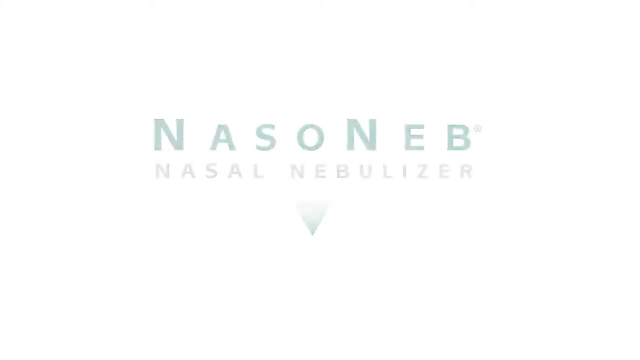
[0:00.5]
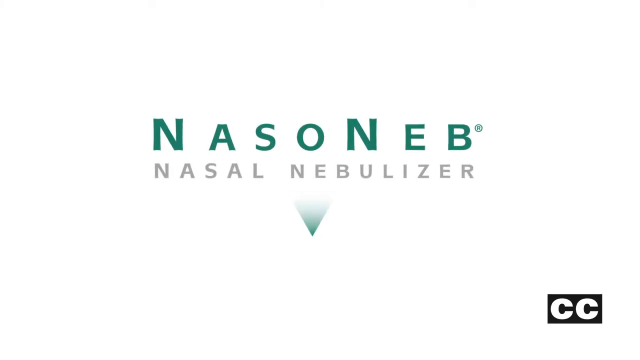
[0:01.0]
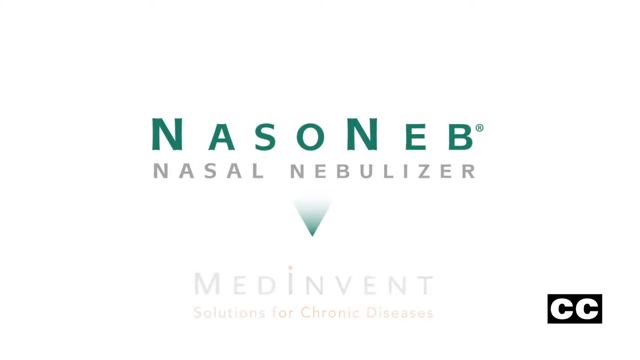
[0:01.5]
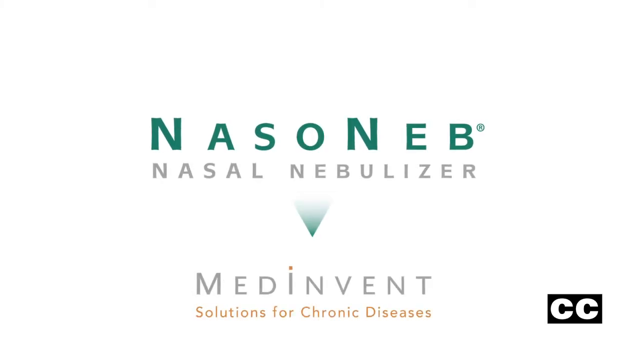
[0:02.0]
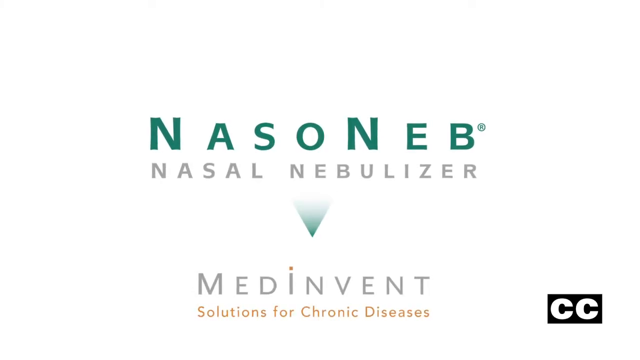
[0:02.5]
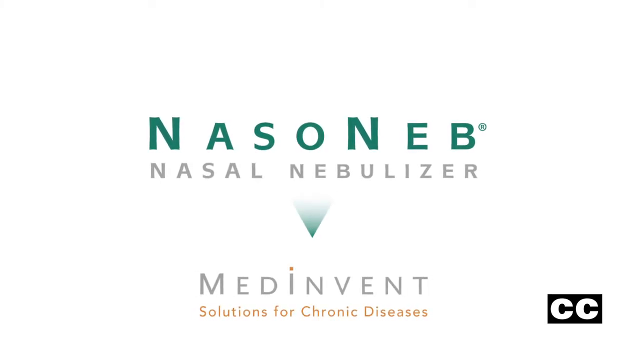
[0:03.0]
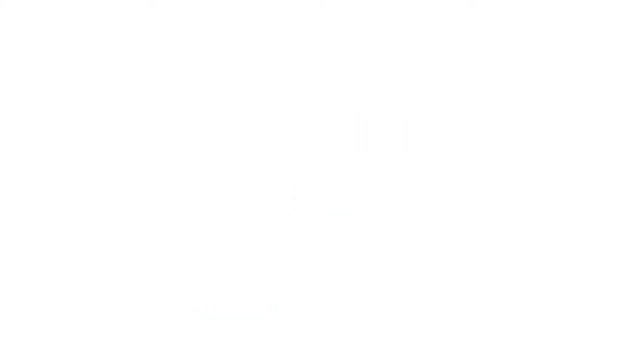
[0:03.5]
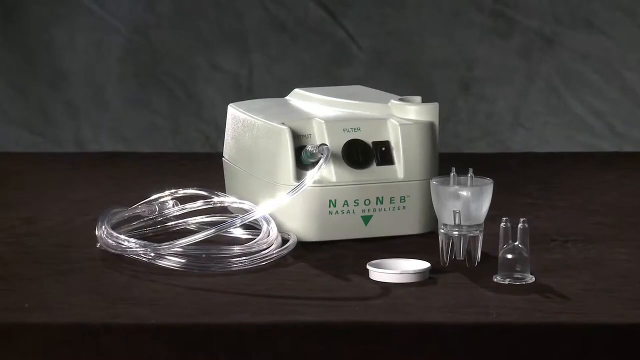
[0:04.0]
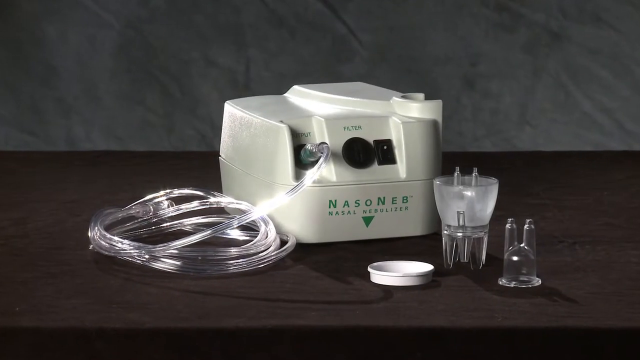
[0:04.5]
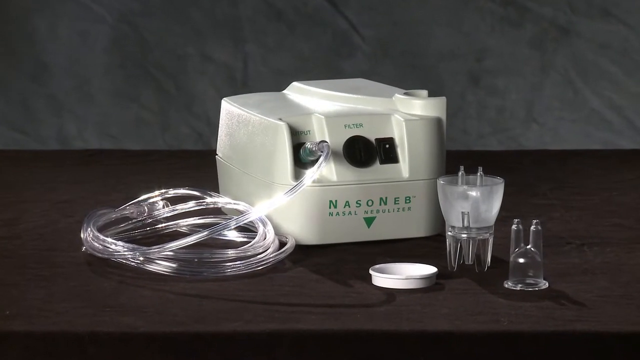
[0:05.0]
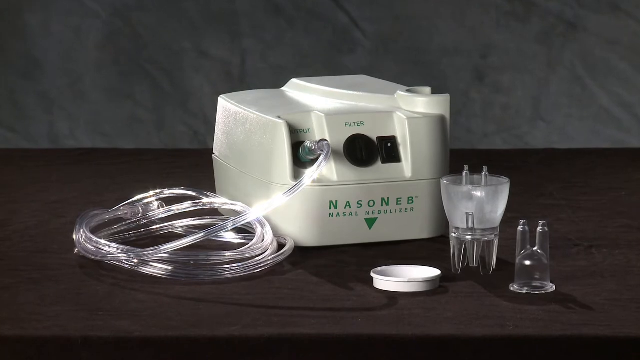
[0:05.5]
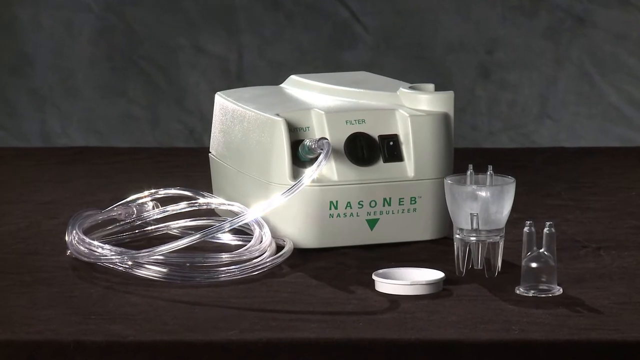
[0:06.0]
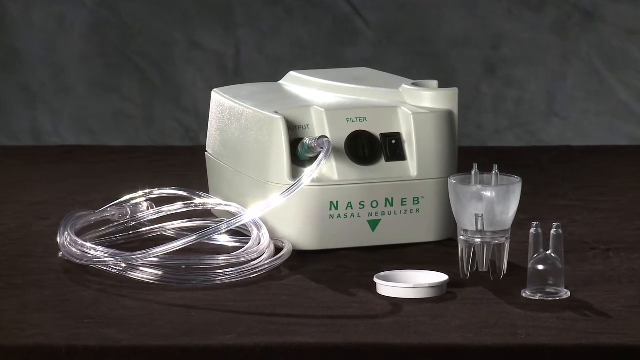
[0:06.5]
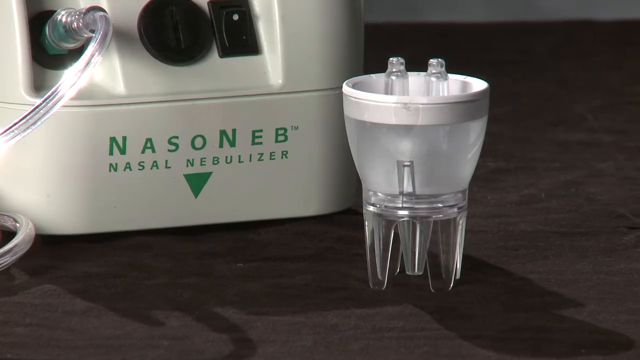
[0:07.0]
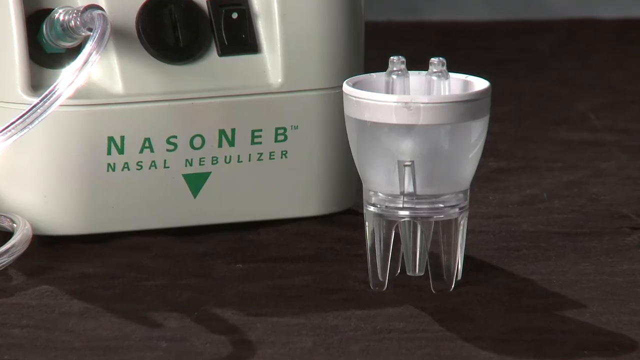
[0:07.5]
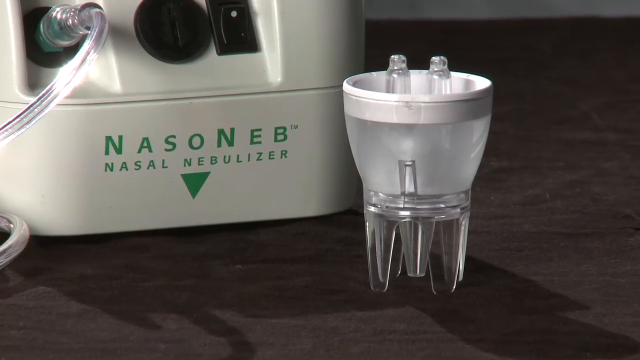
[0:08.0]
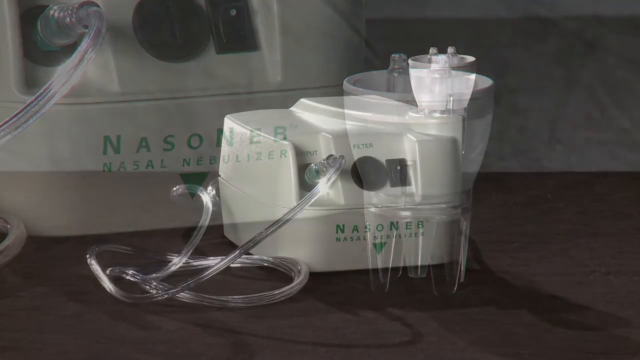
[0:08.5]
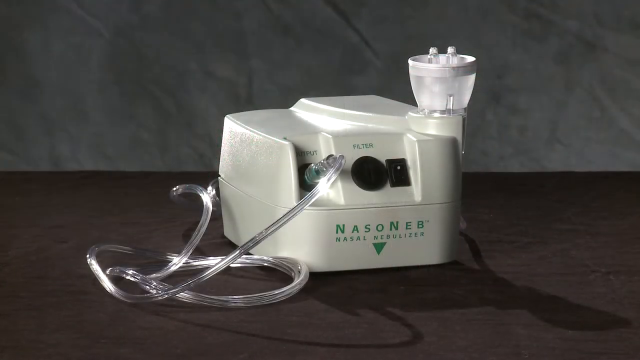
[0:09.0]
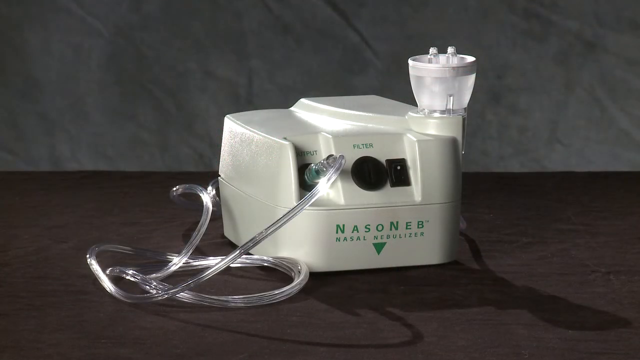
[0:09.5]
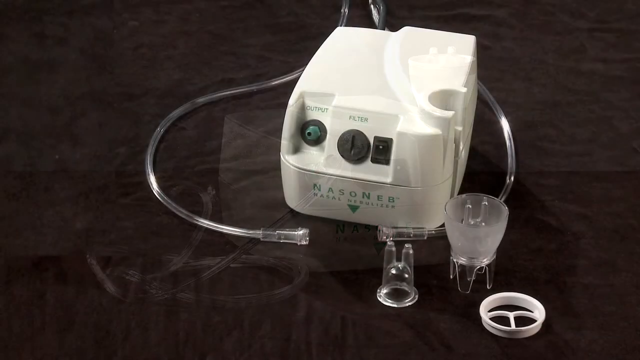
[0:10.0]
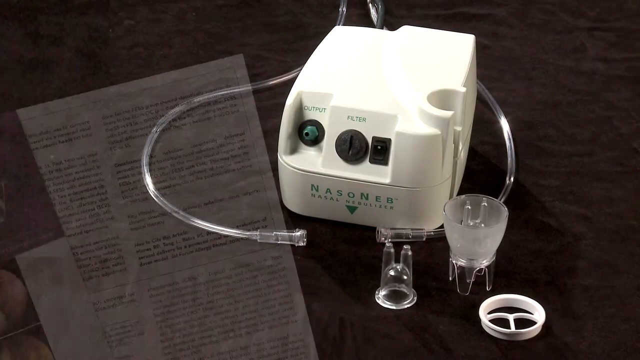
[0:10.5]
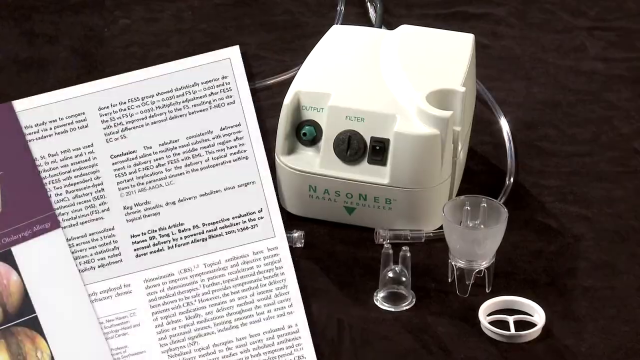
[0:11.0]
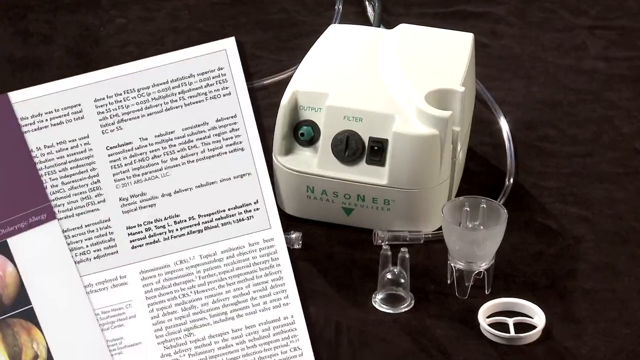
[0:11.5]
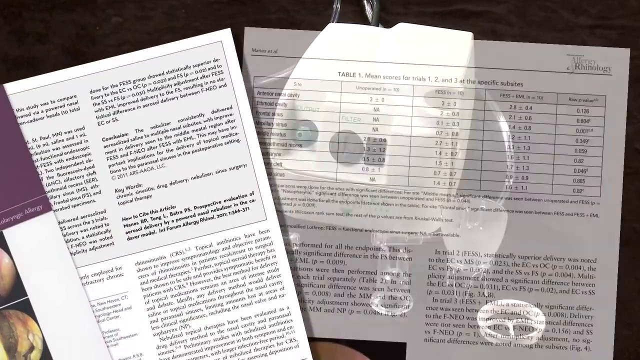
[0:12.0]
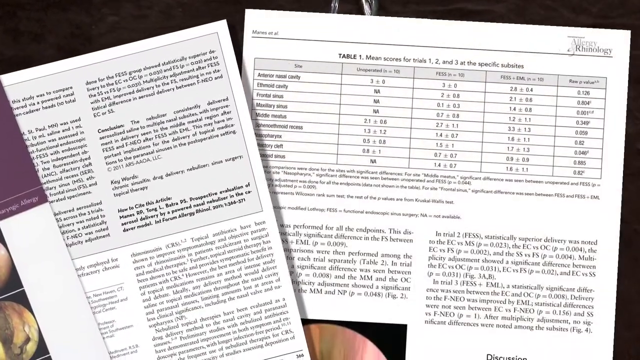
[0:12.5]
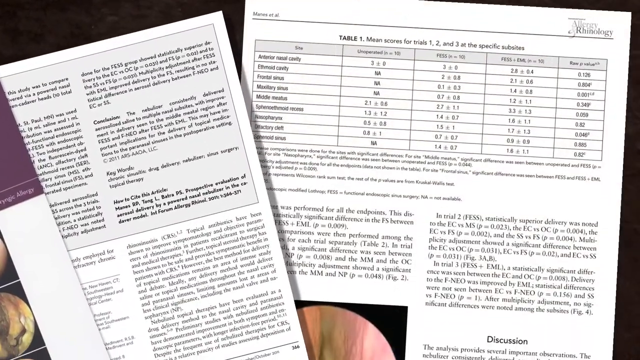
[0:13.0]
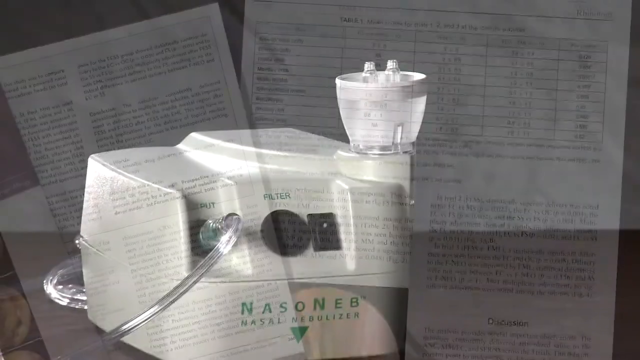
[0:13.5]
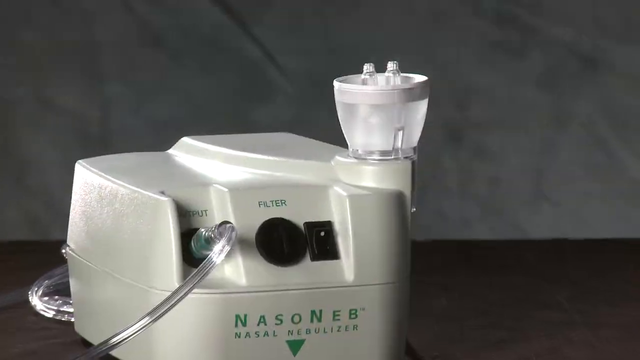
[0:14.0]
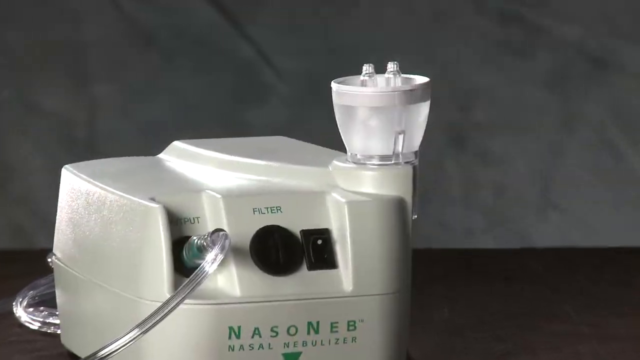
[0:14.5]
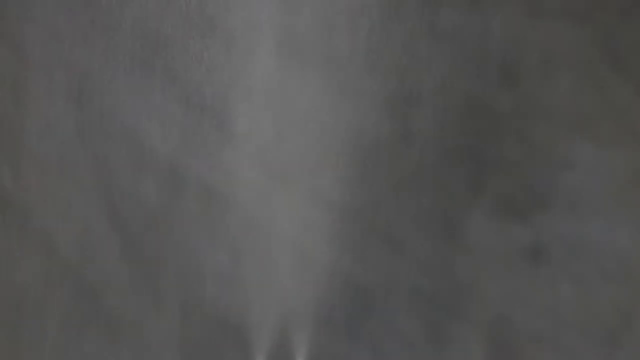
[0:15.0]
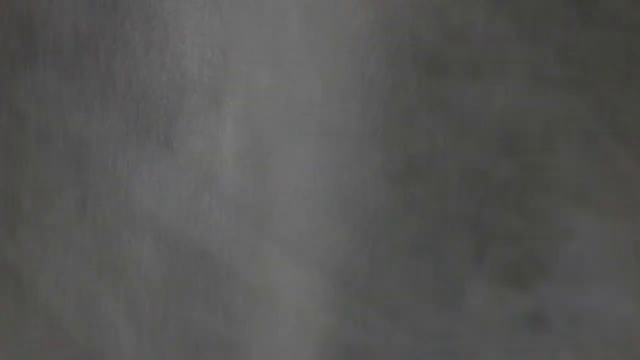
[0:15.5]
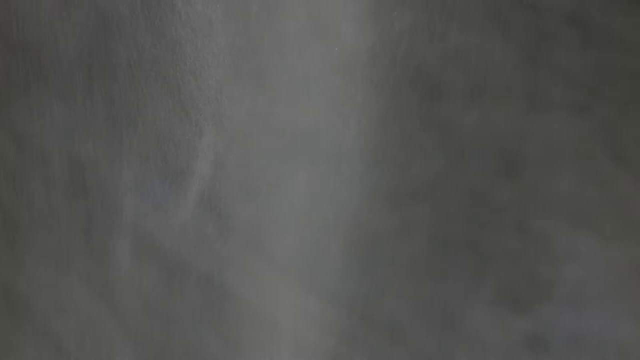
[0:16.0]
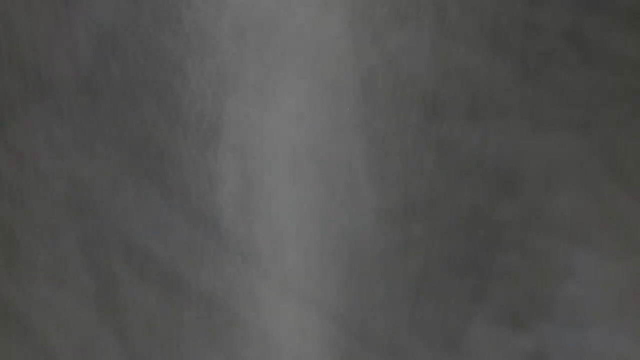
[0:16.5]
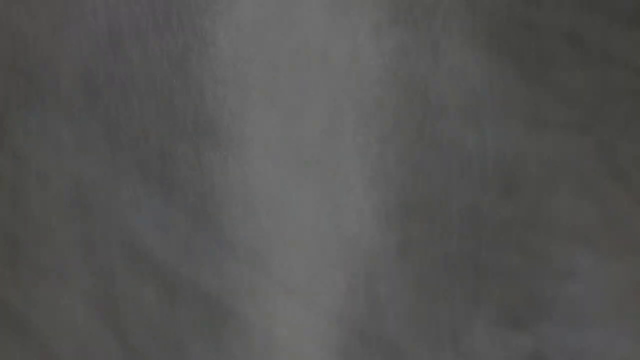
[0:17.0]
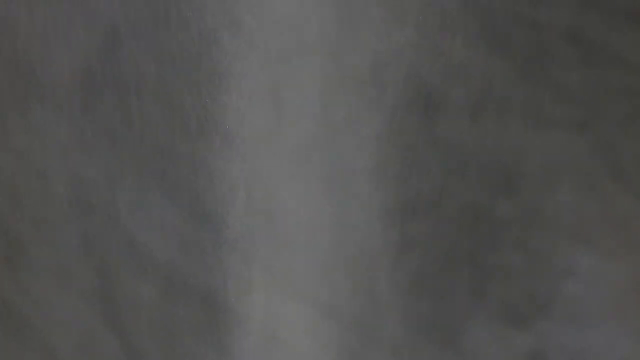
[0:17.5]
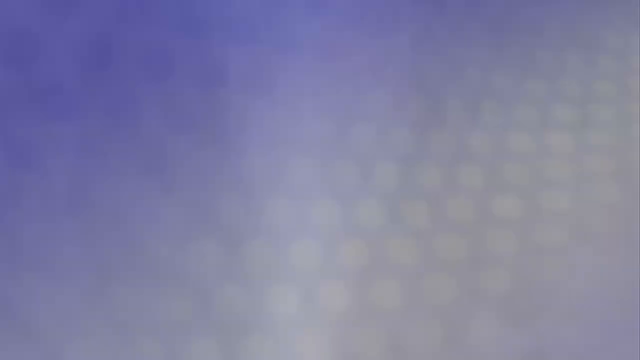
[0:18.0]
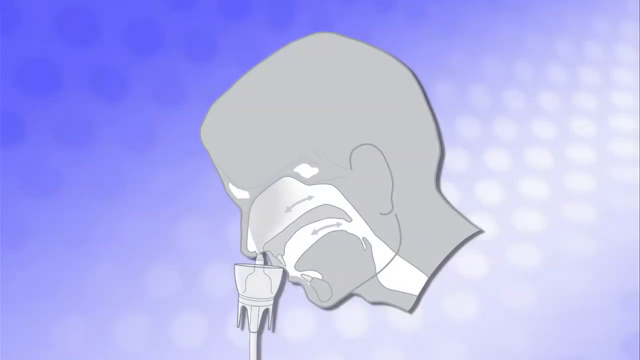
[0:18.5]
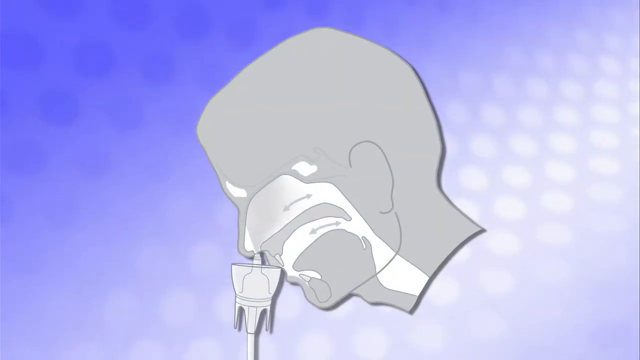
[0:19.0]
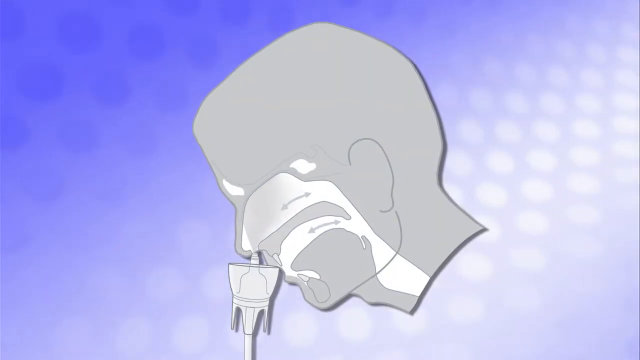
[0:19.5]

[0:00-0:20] The introduction reads "NasoNeb Nasal Nebulizer" in green and grey on a white background. In the bottom right is a black and white icon reading "CC", along with the text "Made Invent, solution for chronic diseases". The NasoNeb Nasal Nebulizer device is shown. The device is black and has a long, transparent plastic tube that connects the nasal pieces to the machine. The machine is white, with an on/off switch and a level adjuster for the airflow. It is placed on top of a black surface, with a grey wall behind. It has two components, which are connected together to make it work. Some blurry newspapers are shown. The machine has two controls: a switch to turn it on and off and a knob, which is a filter knob. The transparent pipe is connected to the output.